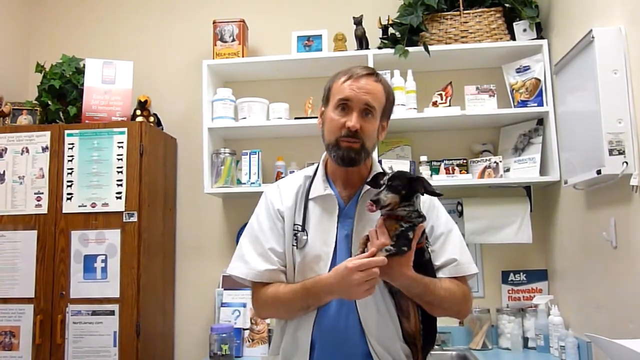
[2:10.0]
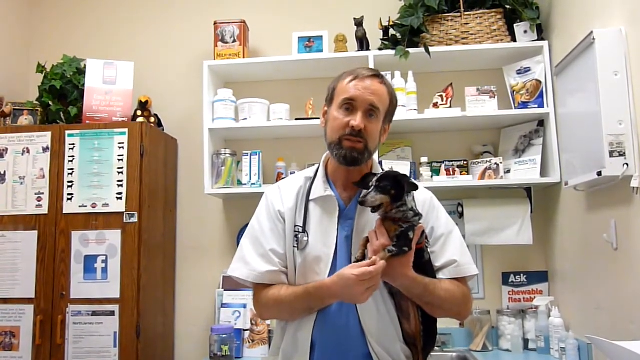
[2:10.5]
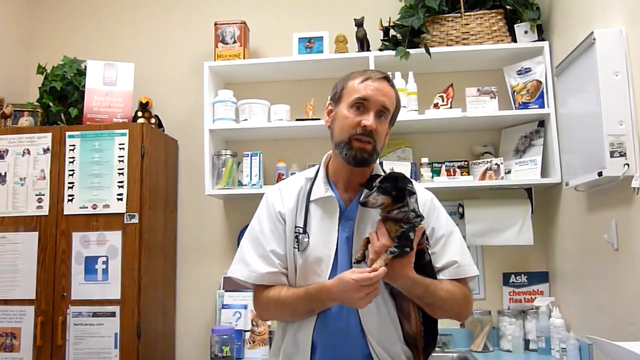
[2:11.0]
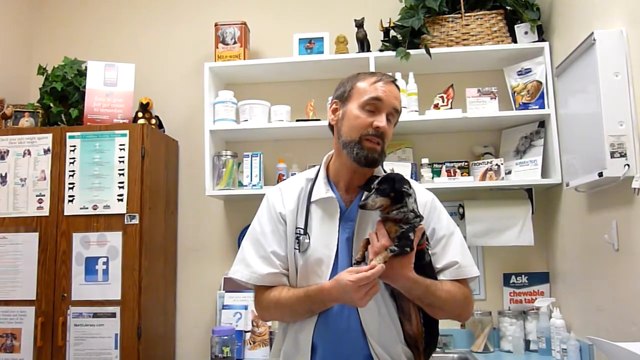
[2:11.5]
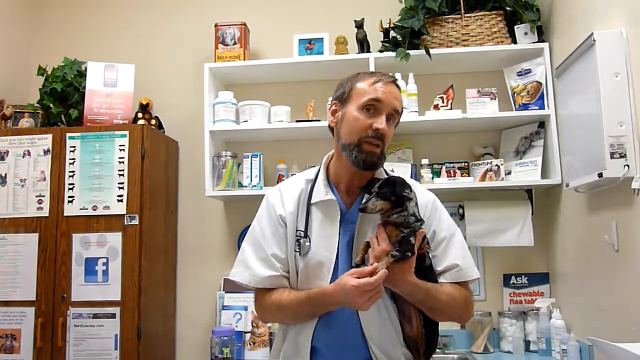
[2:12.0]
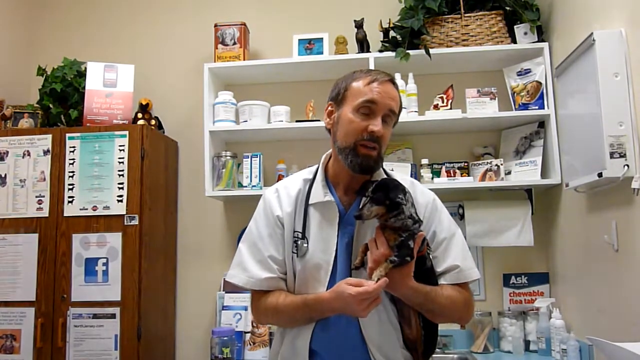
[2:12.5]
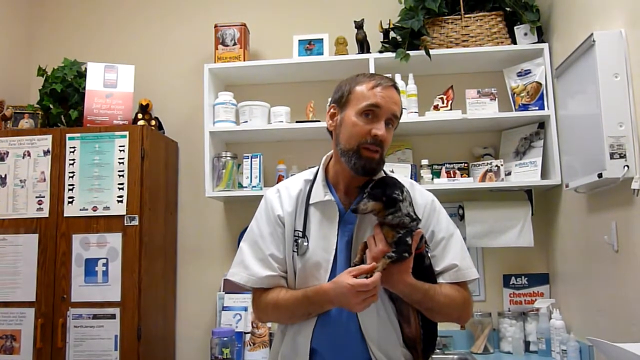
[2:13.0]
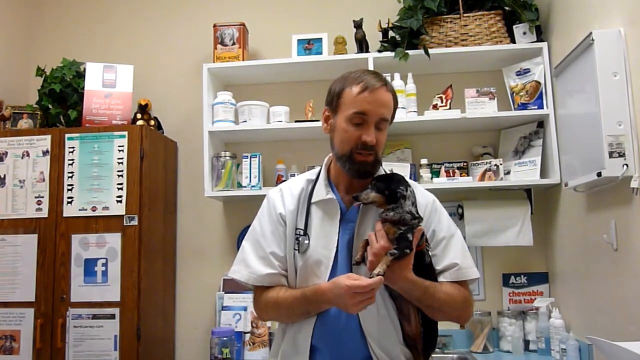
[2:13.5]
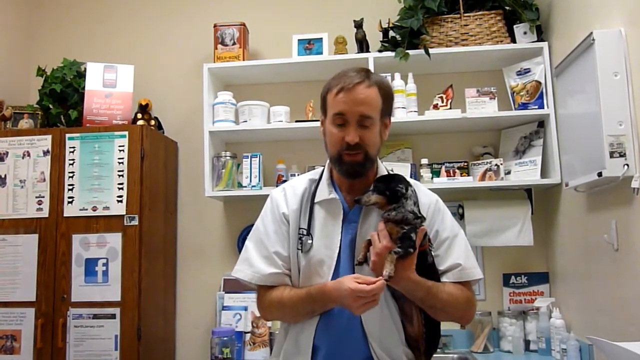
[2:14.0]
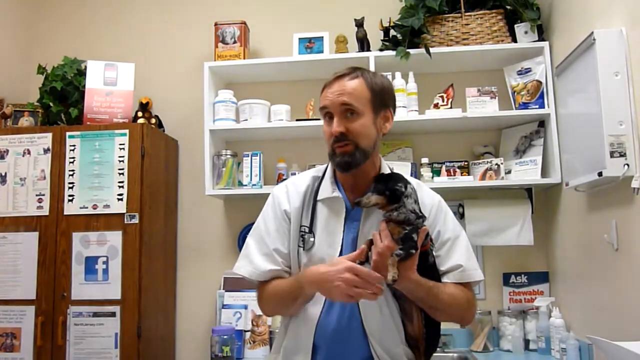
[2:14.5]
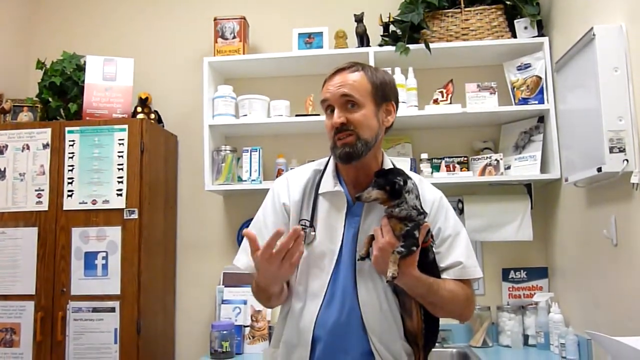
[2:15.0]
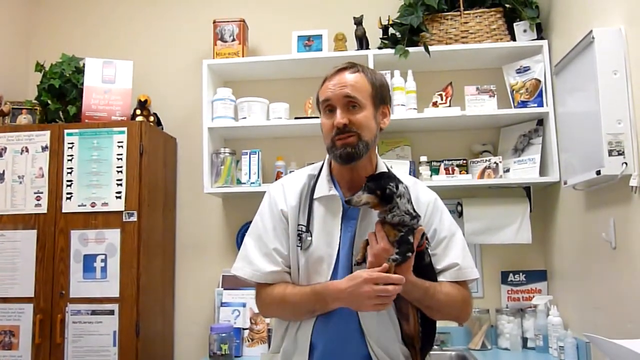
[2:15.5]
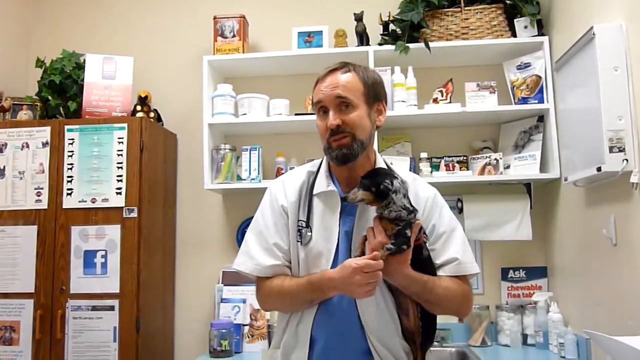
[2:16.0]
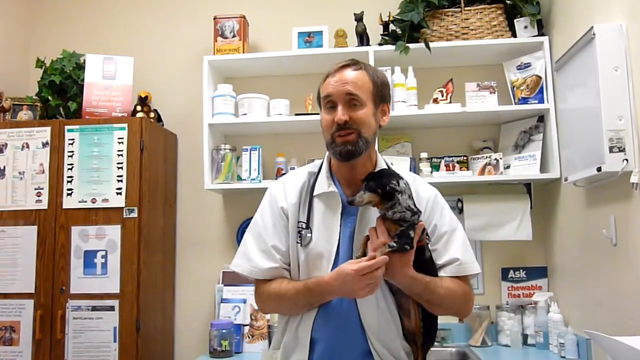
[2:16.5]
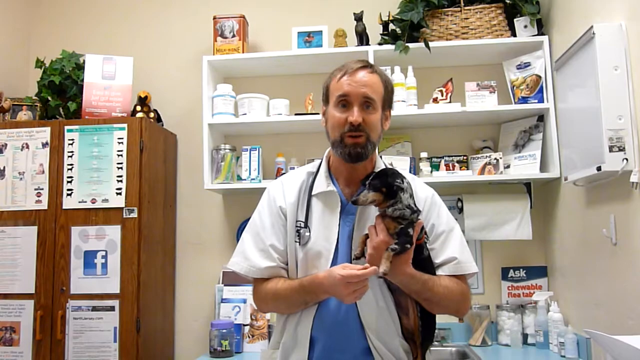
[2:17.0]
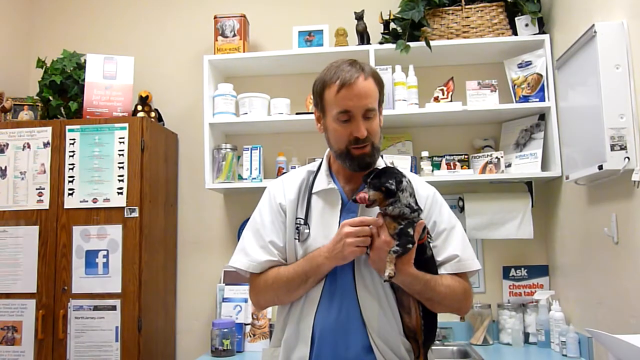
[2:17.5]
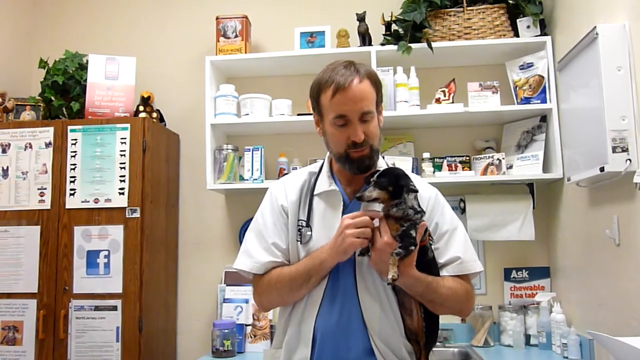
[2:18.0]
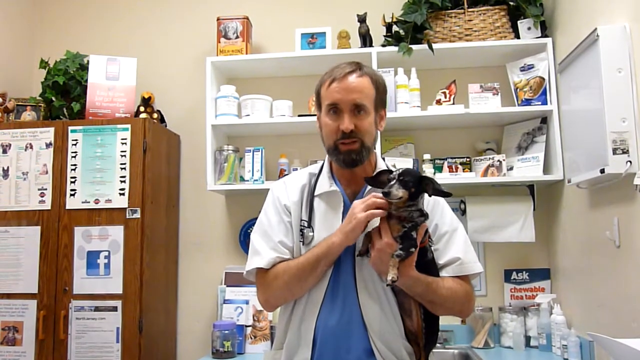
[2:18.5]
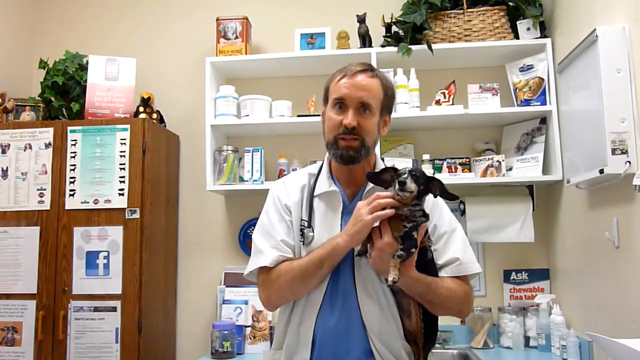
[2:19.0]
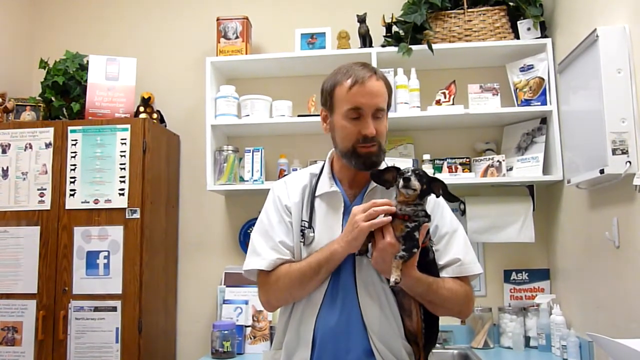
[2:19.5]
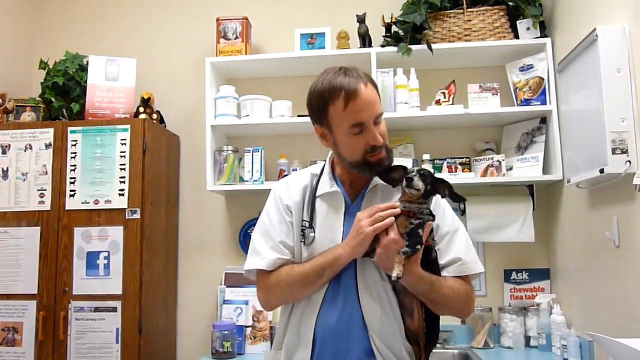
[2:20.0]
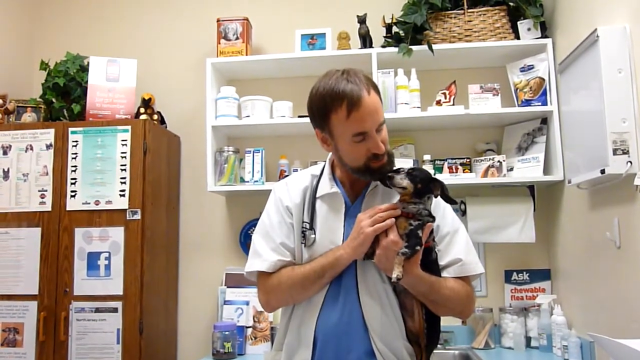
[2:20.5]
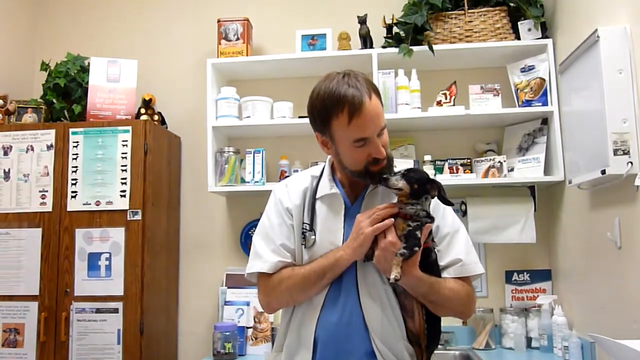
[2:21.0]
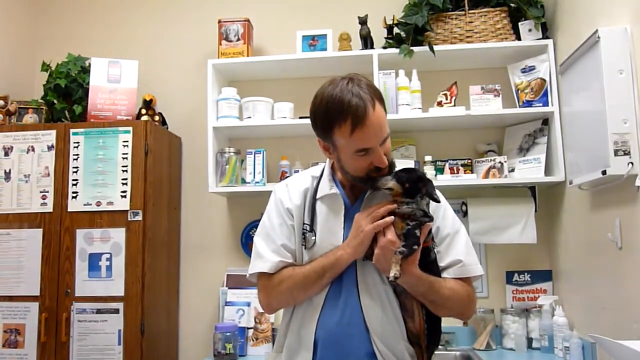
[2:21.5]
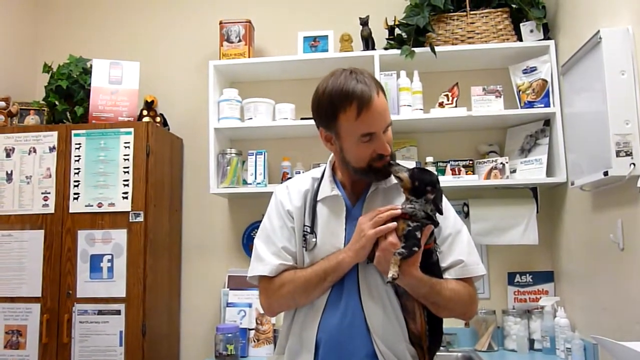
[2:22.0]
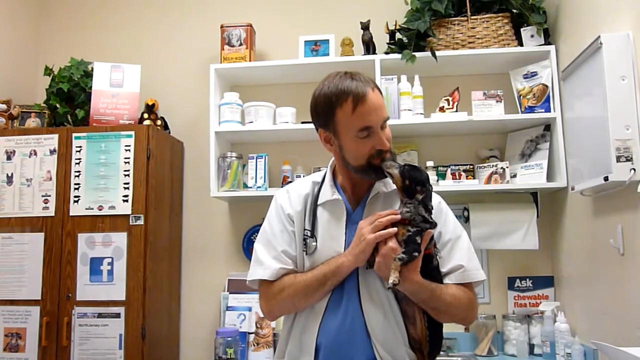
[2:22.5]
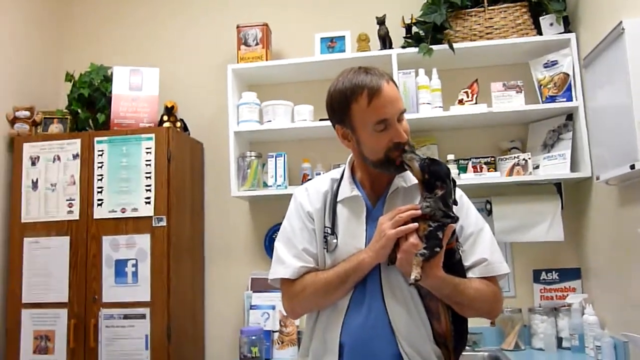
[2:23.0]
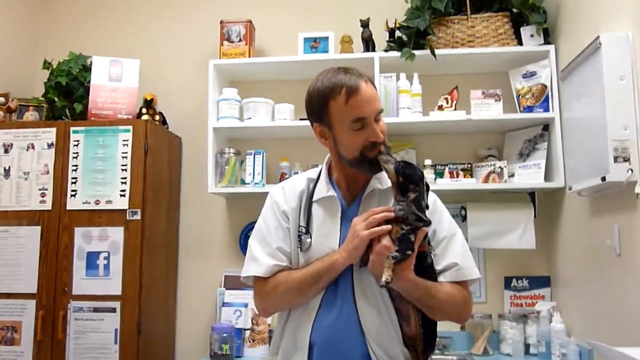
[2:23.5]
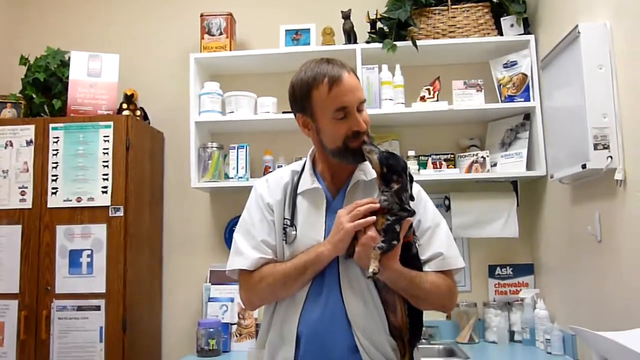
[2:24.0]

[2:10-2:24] Behind the vet is a shelving unit with two complete shelves and the top of the unit visible. To the left of the shelving unit is a closed brown cabinet with a flower on top. The vet keeps talking as he rubs the dog's front paw with his right hand, then rubs the dog's neck where his collar is and lets the dog kiss him on his beard. The vet's office looks very clean and well-furnished.